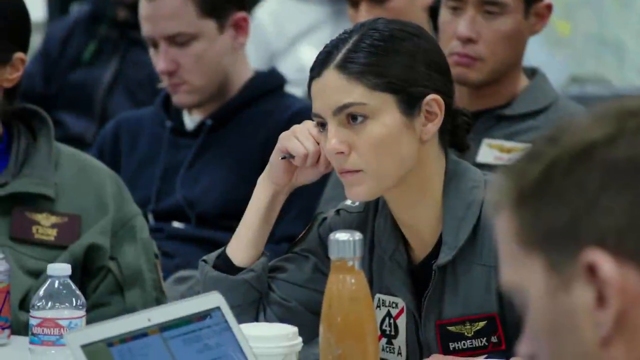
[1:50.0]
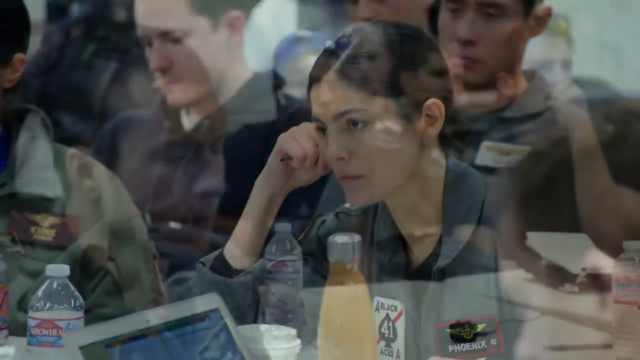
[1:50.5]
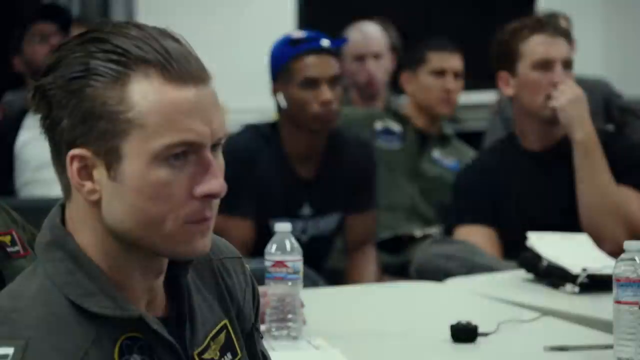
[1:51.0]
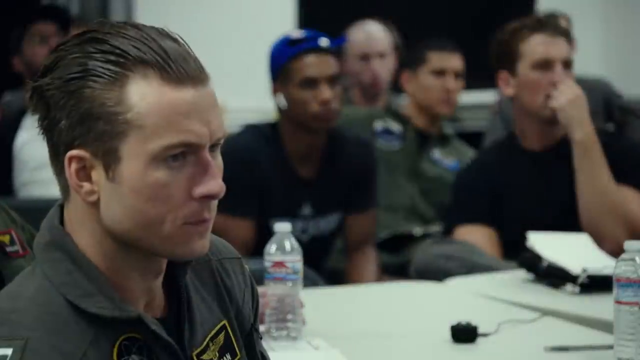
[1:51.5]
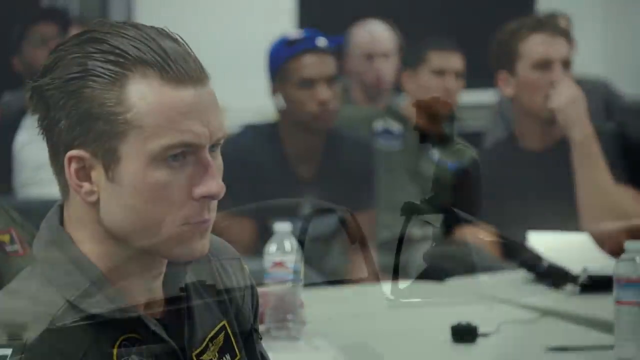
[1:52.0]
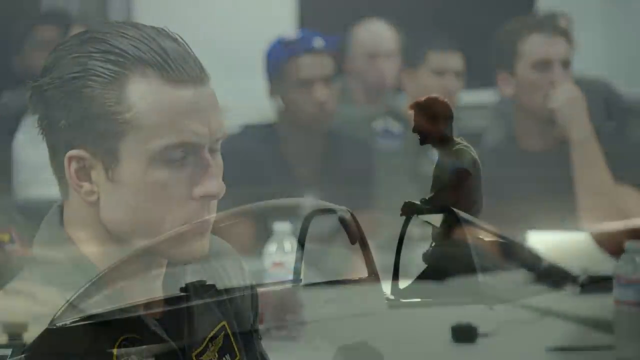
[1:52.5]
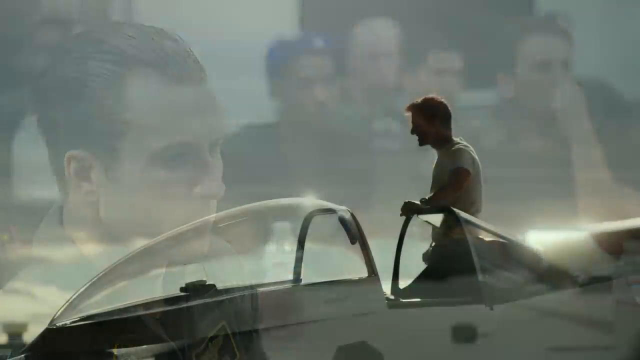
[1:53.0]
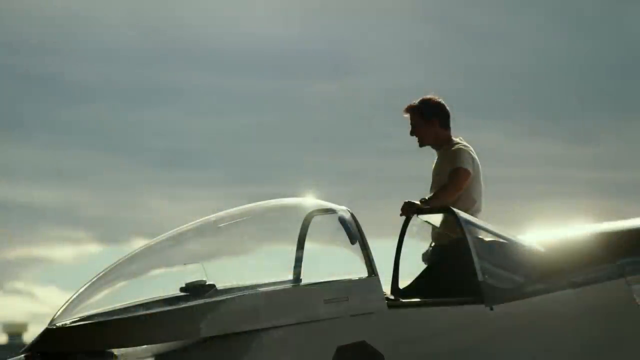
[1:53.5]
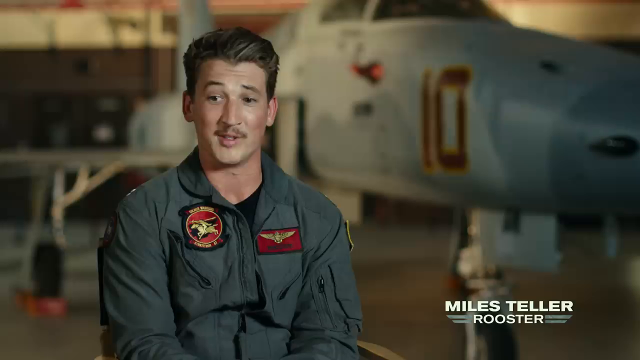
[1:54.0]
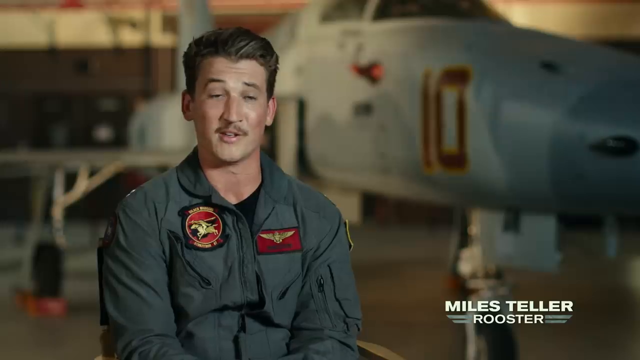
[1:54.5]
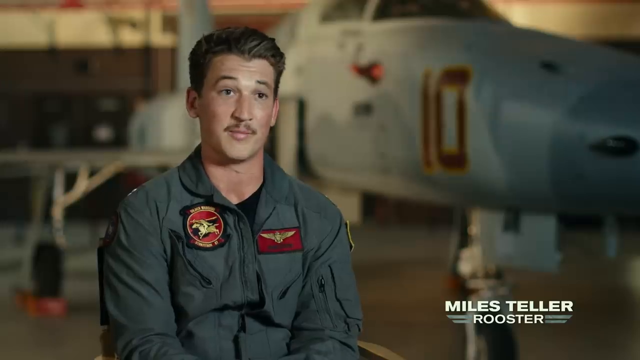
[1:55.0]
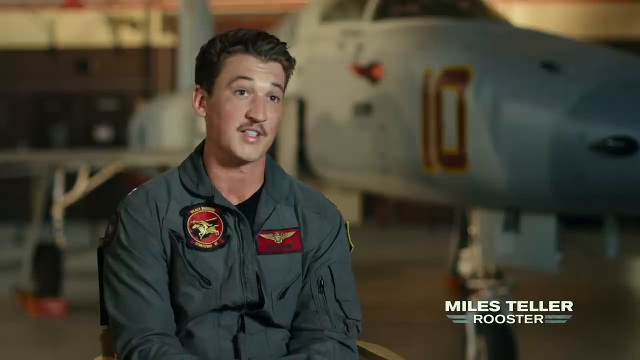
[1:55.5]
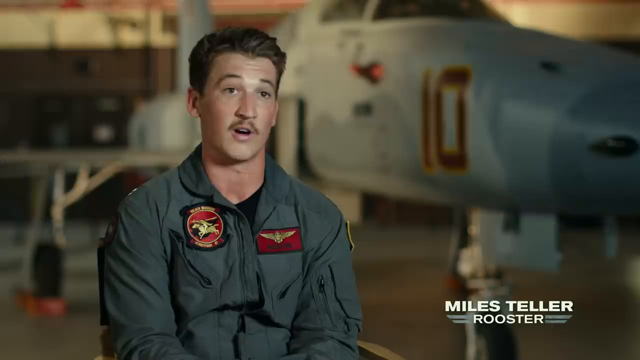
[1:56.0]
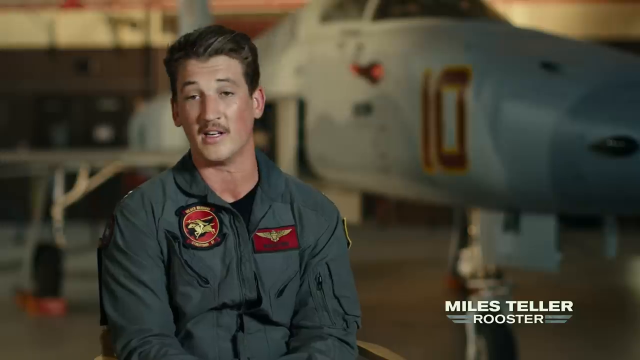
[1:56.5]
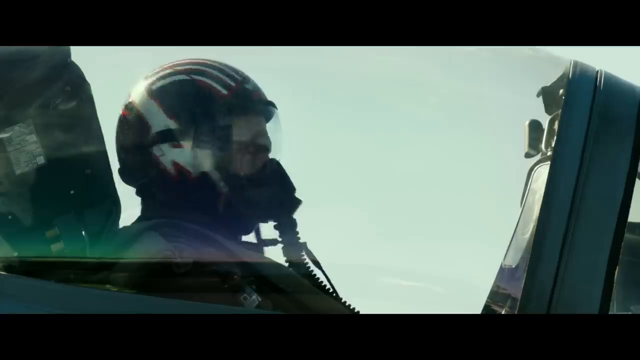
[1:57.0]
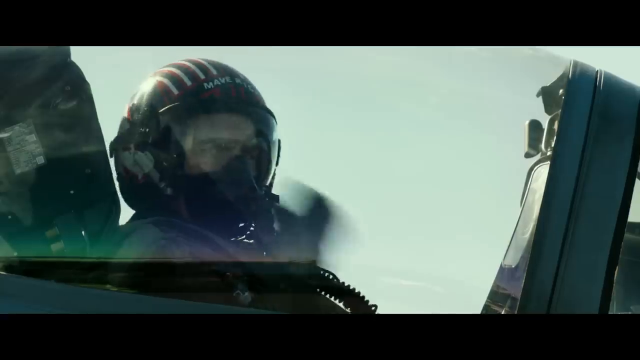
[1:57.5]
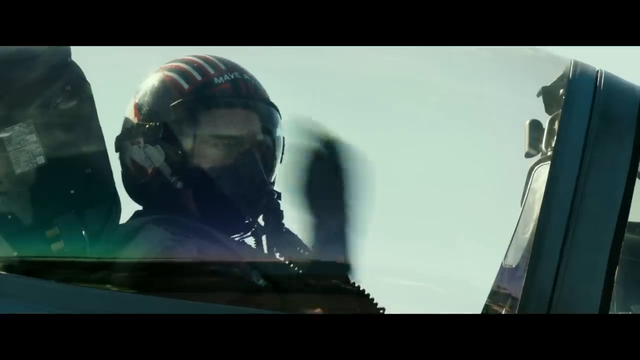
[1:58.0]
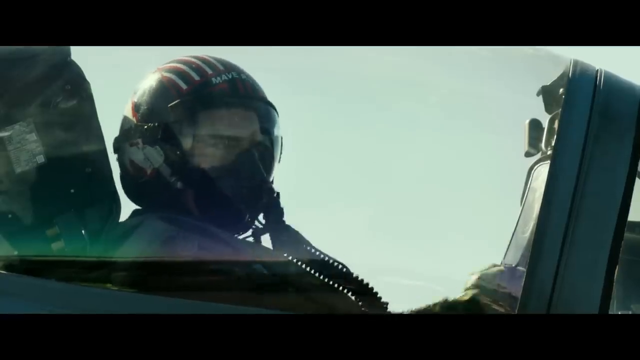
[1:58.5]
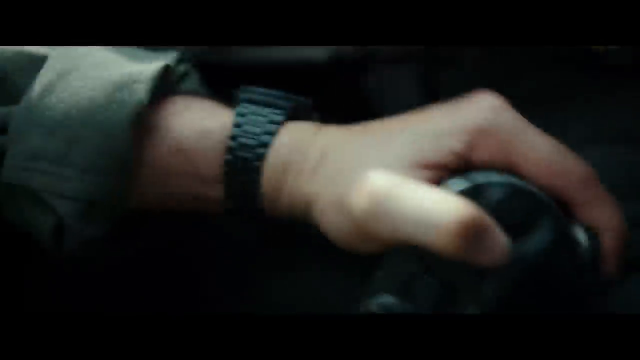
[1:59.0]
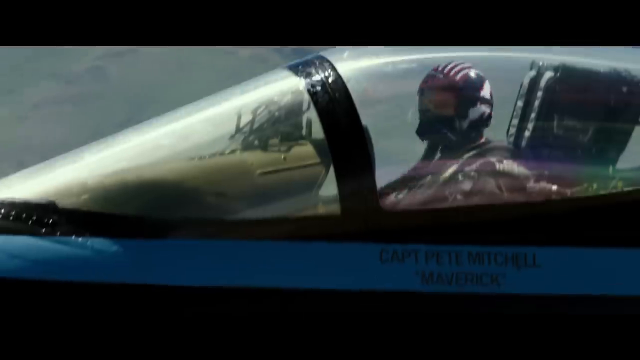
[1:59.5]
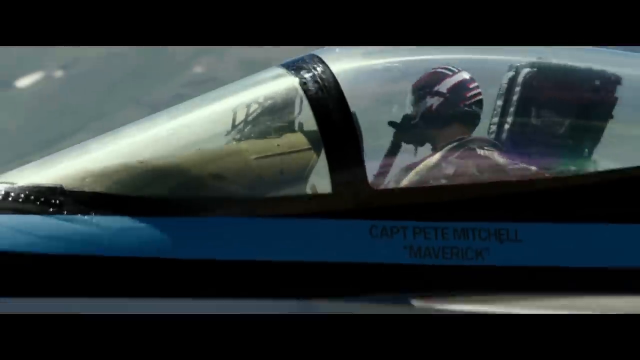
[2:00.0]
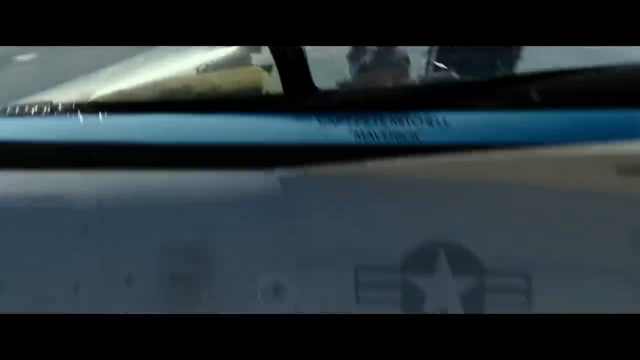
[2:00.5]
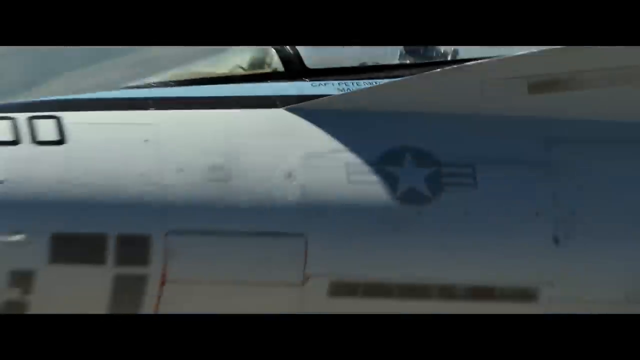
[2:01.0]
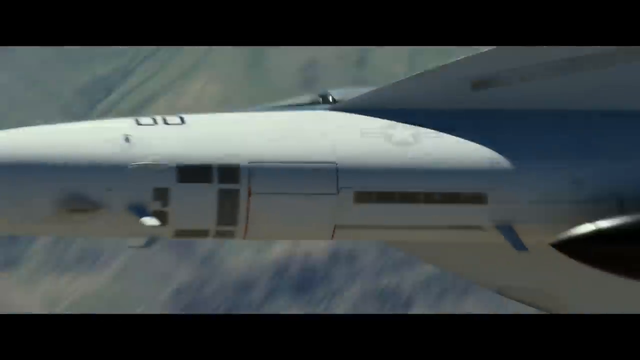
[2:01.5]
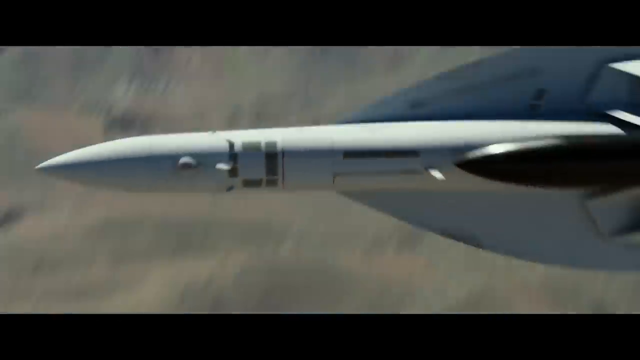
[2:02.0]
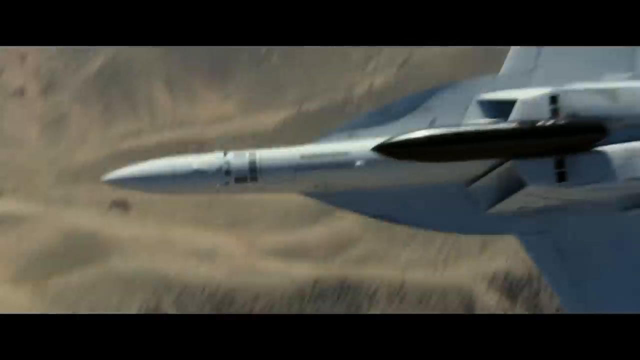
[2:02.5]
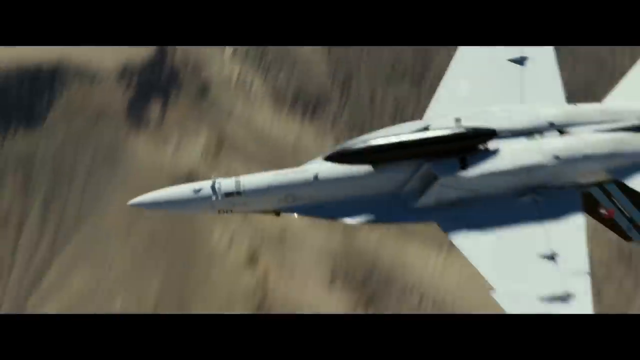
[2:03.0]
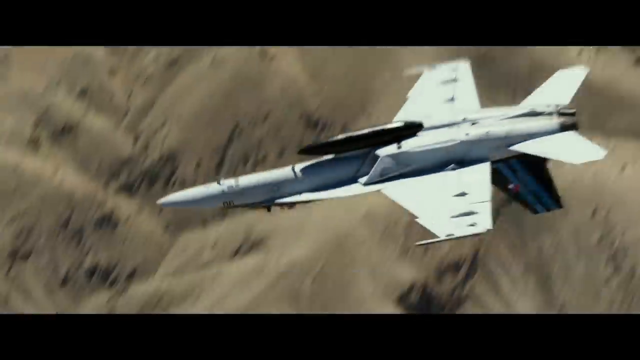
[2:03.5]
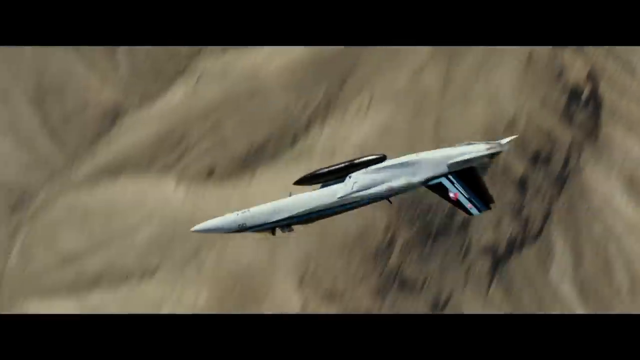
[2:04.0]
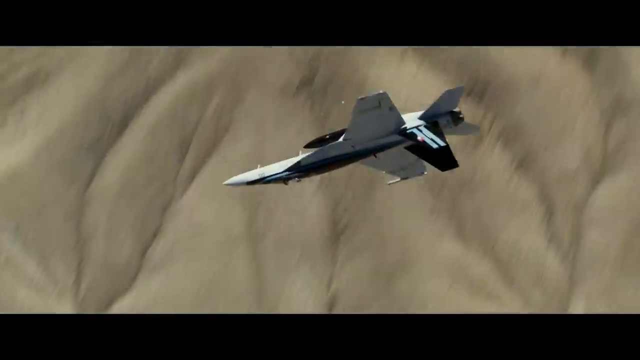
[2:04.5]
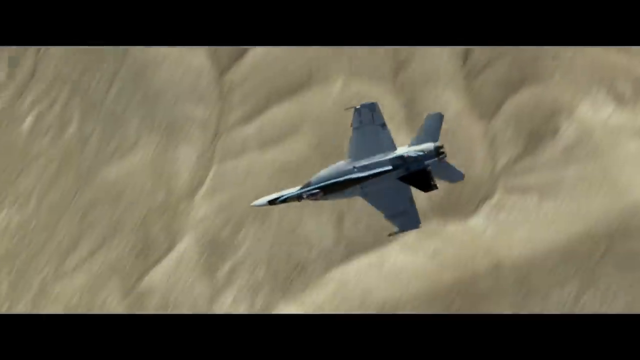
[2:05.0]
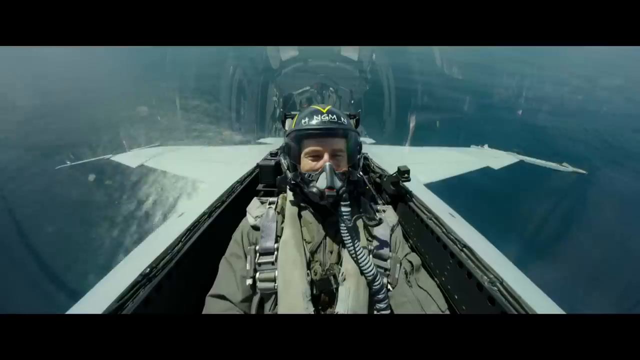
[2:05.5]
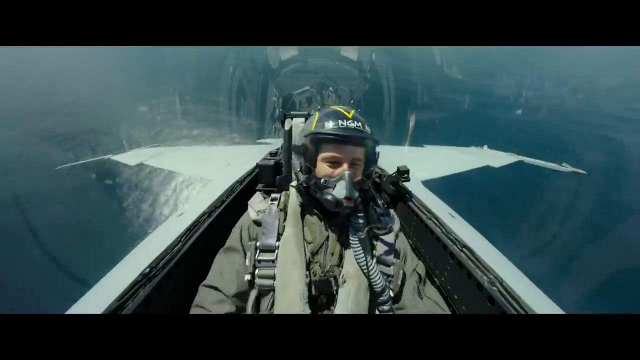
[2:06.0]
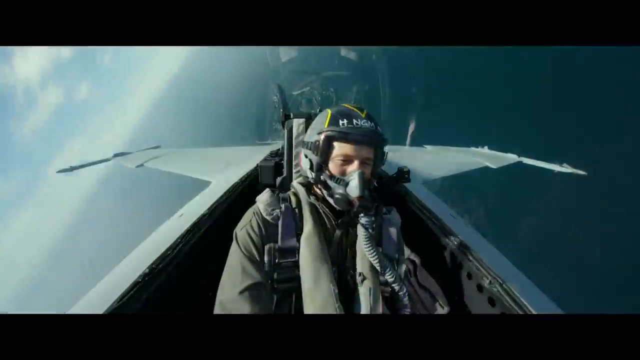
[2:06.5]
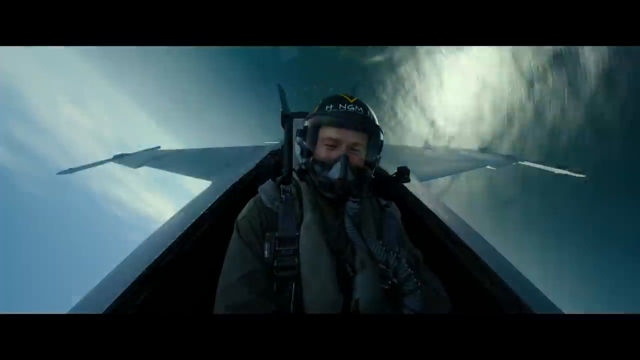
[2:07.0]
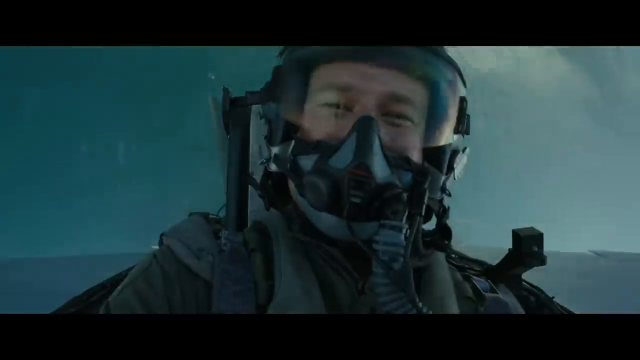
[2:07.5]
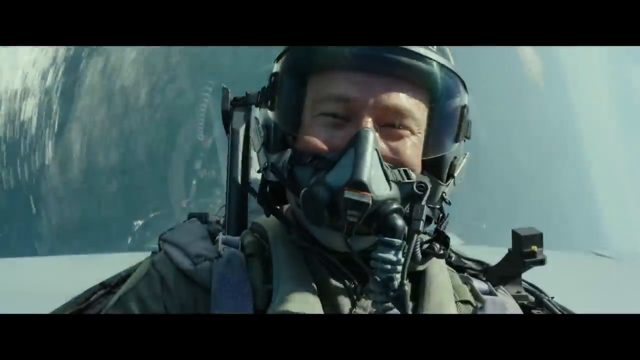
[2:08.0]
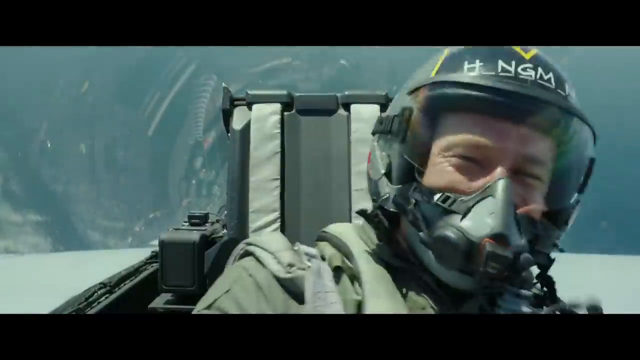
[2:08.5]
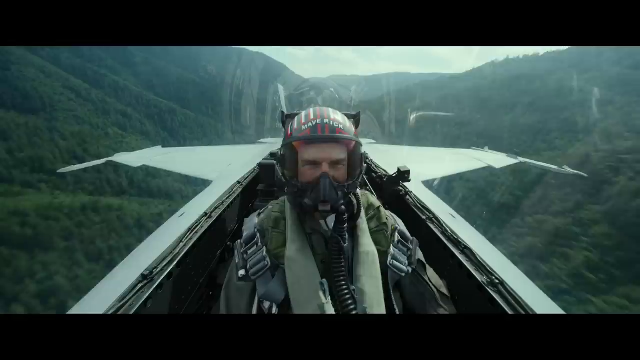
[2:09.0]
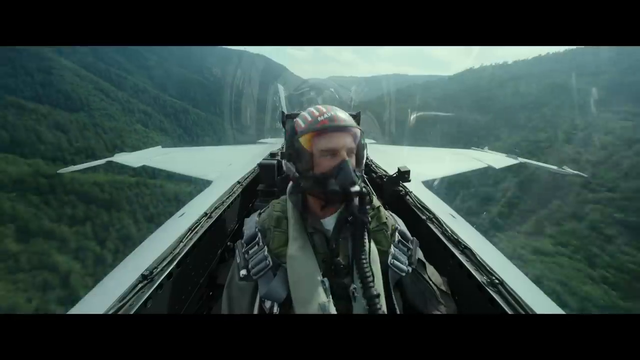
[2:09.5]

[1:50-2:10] People of different ages wear black, green and some white clothes. It looks like a competition in the air using aeroplanes. One man looks like he is enjoying himself, while others look sad. There are many people: some on the ground watch and take videos, and some in an office appear to explain what is going on. Three people compete in the air, two men and one woman, riding in white aeroplanes; they wear black masks and black clothes, and they look like they are suffocating, as some have removed the masks from their noses. Some people look sad and some look happy as they take videos. Men wearing red seem to direct the competitors which way to go in what looks like a race. Jerry and Joseph appear, apparently explaining, and look like directors. "June 2020" and "Maverick" appear.